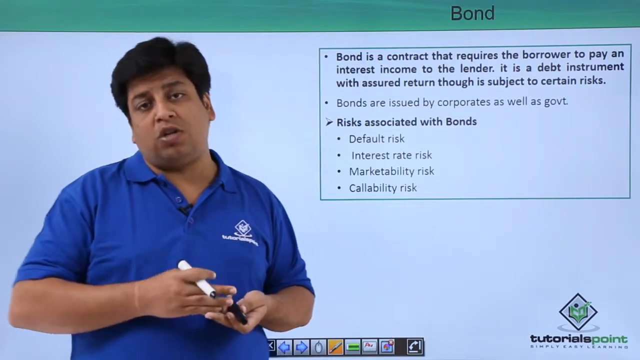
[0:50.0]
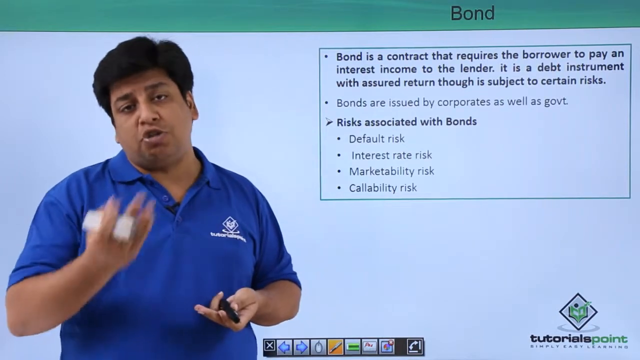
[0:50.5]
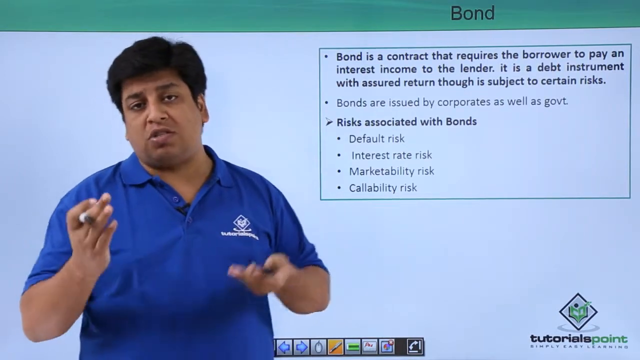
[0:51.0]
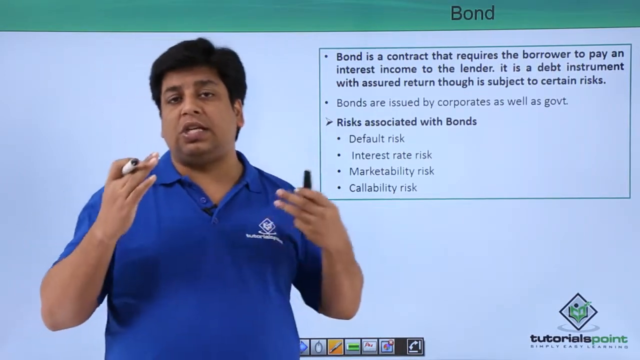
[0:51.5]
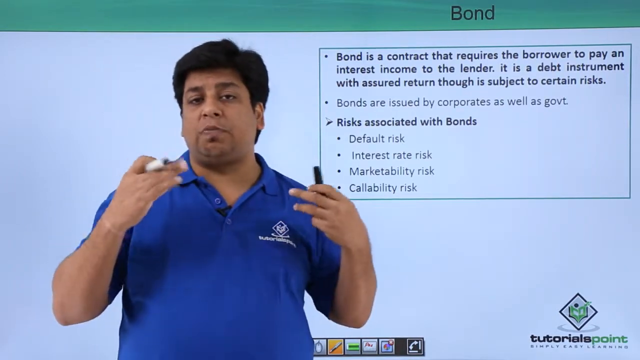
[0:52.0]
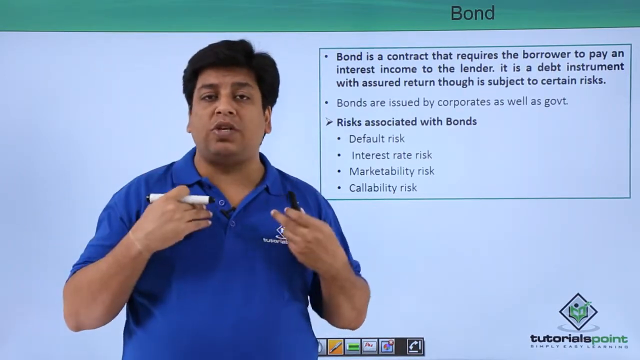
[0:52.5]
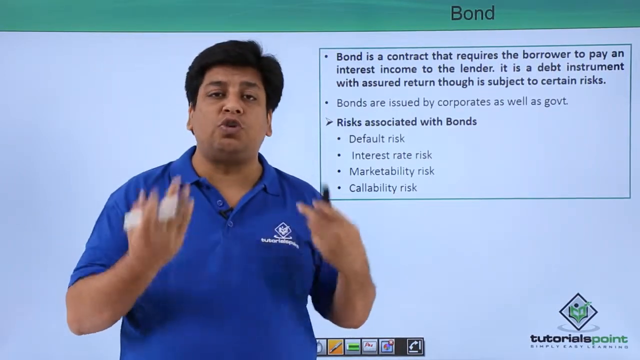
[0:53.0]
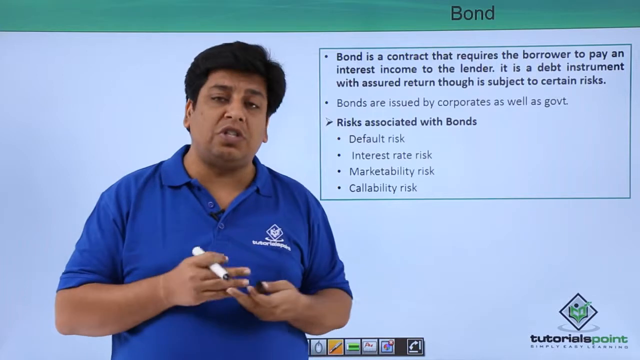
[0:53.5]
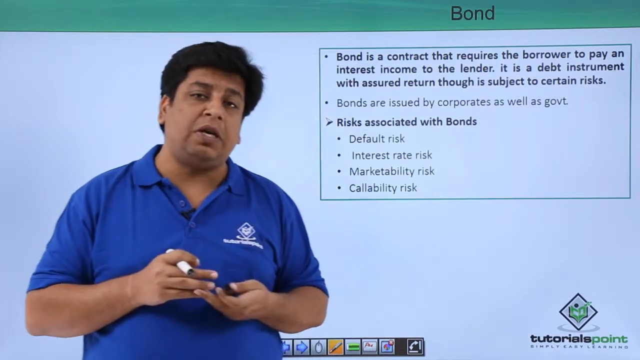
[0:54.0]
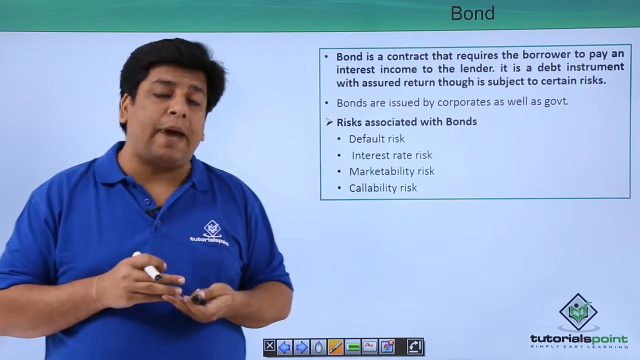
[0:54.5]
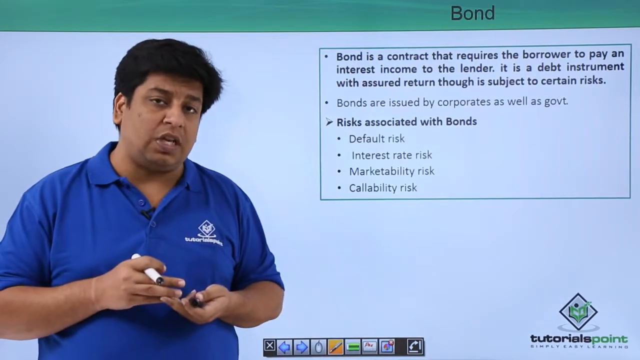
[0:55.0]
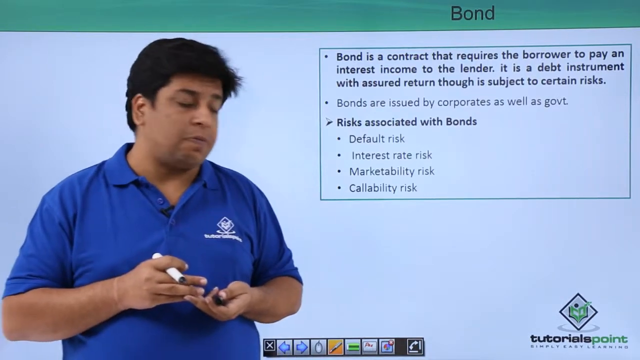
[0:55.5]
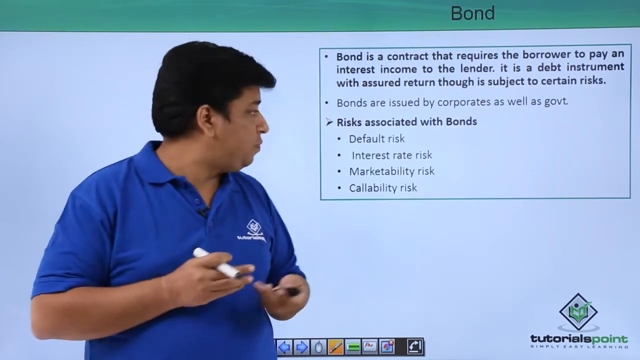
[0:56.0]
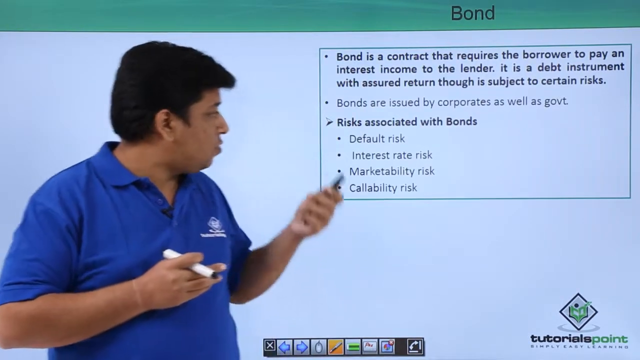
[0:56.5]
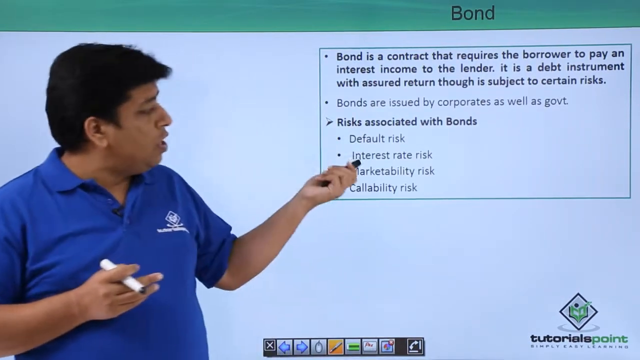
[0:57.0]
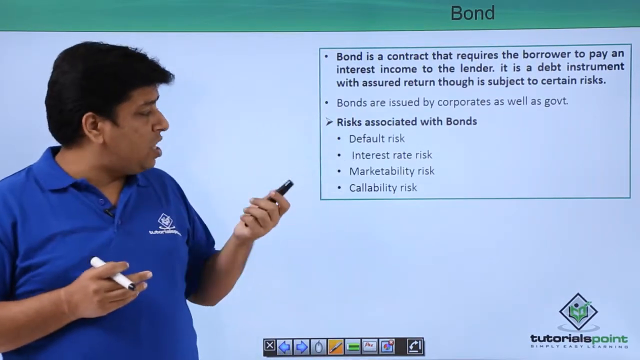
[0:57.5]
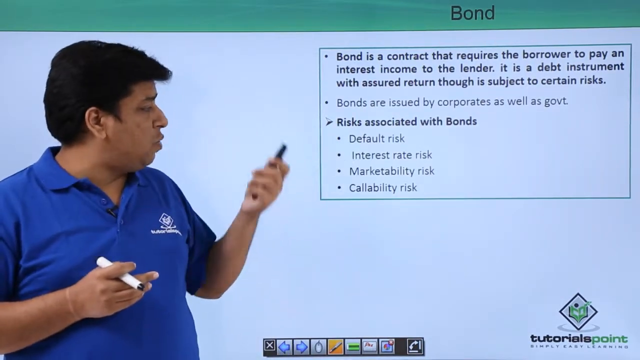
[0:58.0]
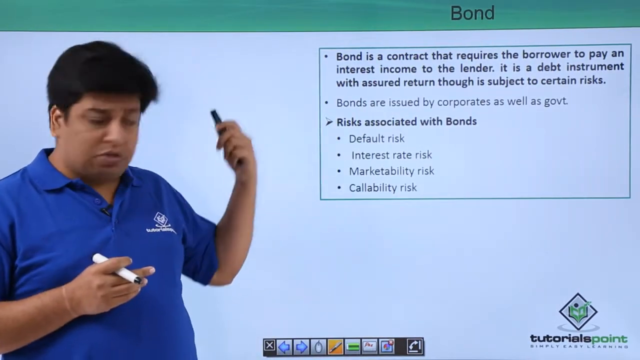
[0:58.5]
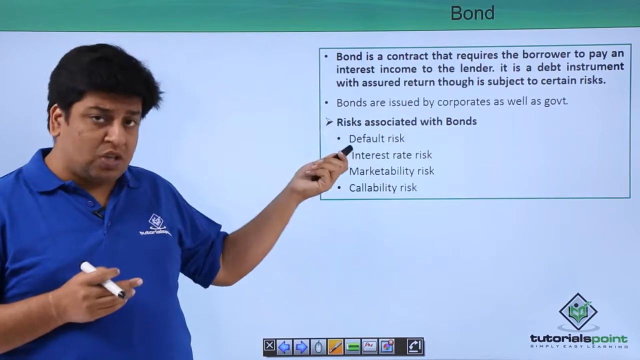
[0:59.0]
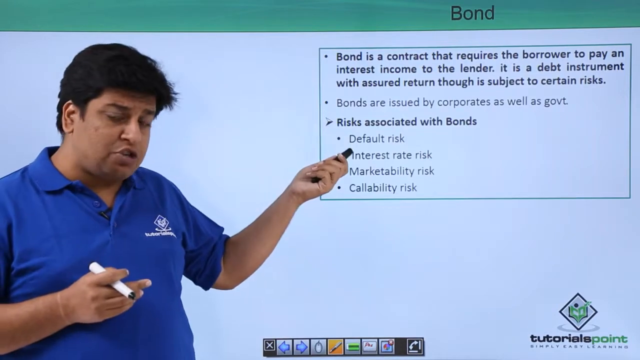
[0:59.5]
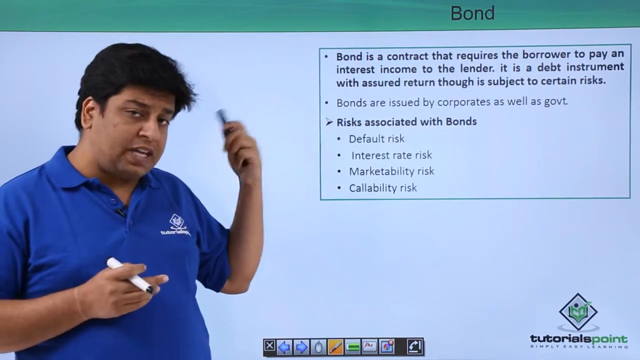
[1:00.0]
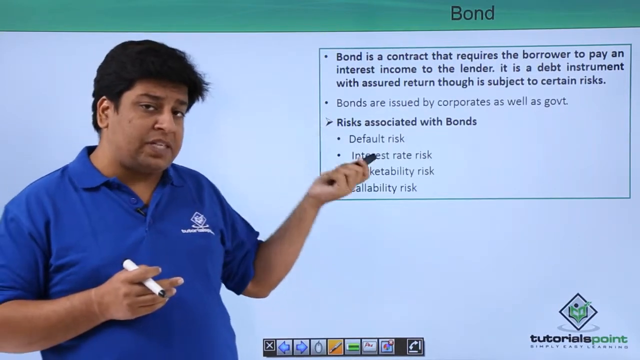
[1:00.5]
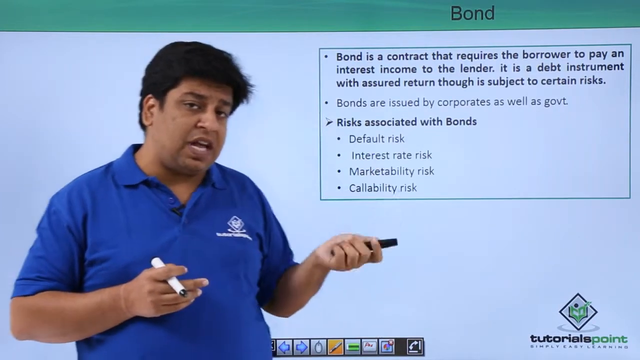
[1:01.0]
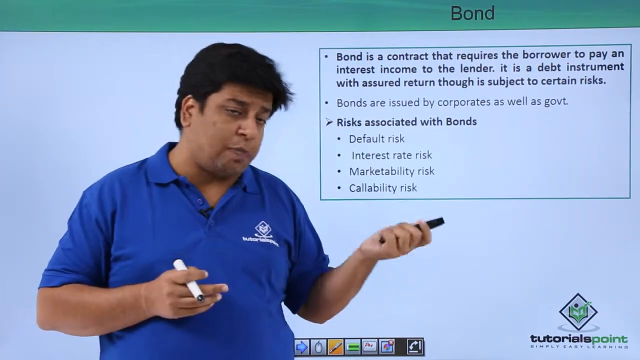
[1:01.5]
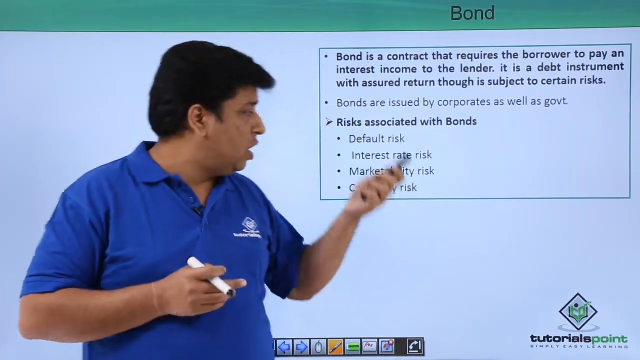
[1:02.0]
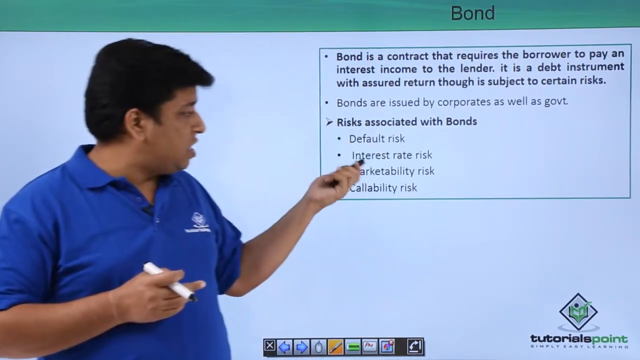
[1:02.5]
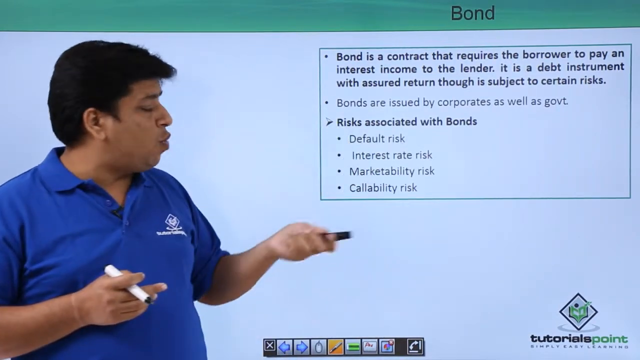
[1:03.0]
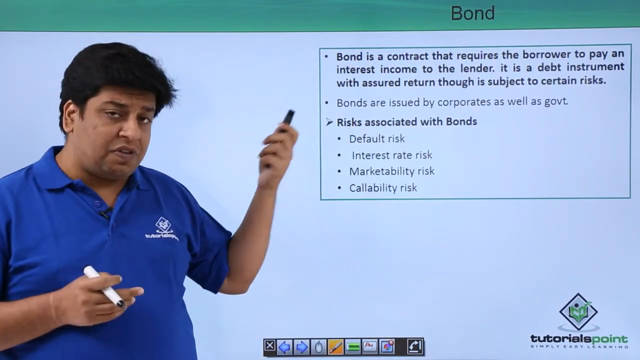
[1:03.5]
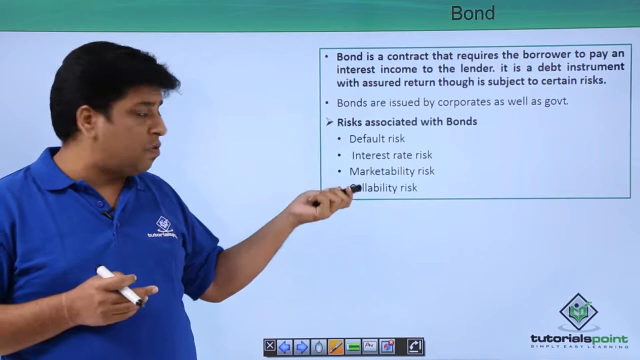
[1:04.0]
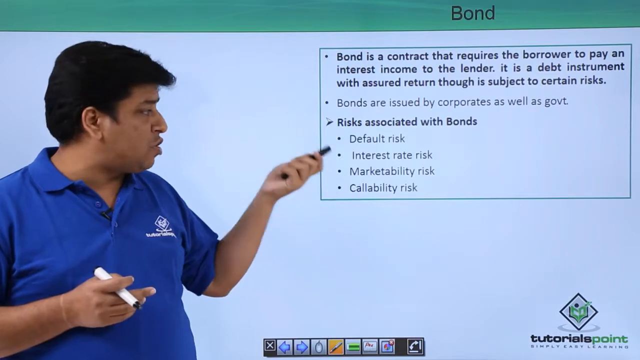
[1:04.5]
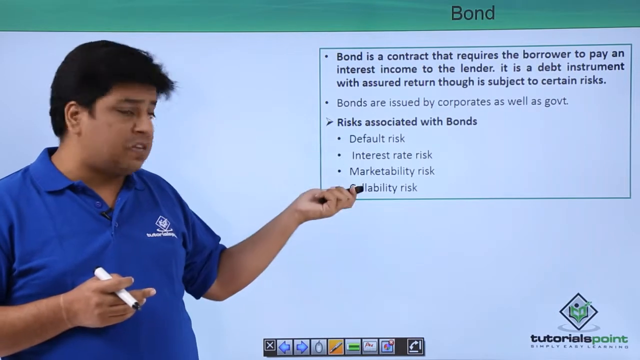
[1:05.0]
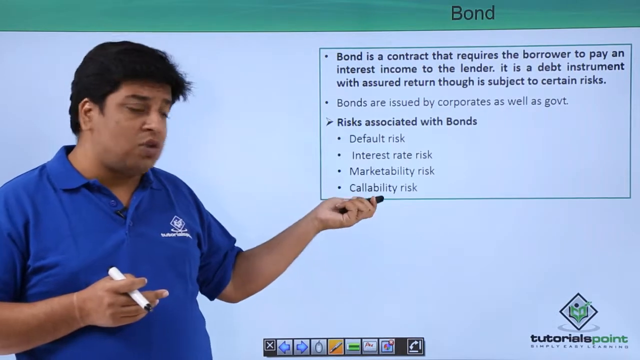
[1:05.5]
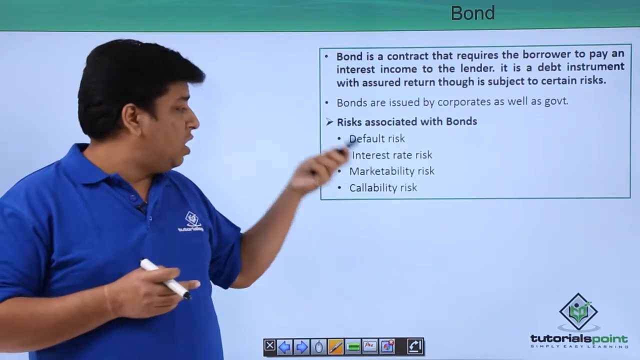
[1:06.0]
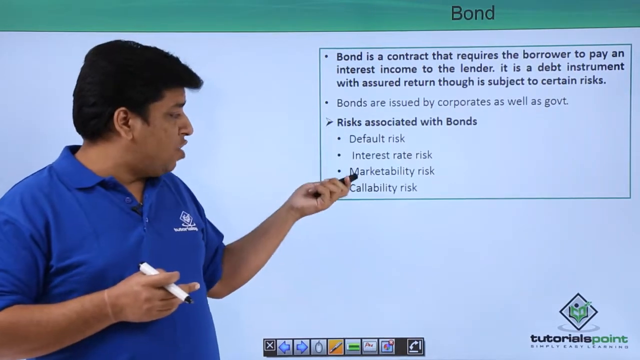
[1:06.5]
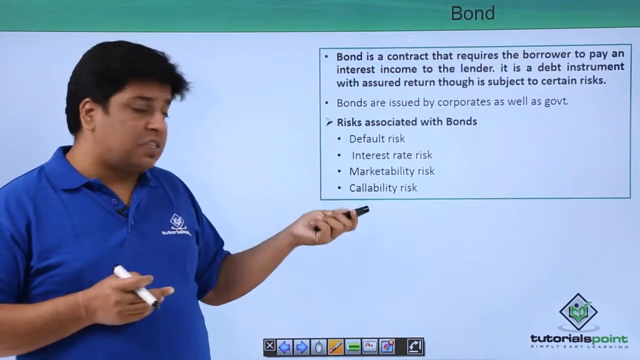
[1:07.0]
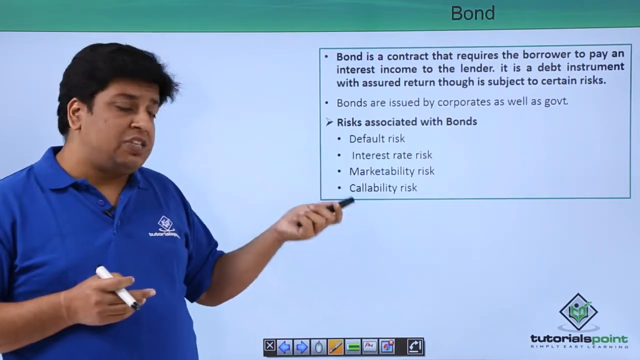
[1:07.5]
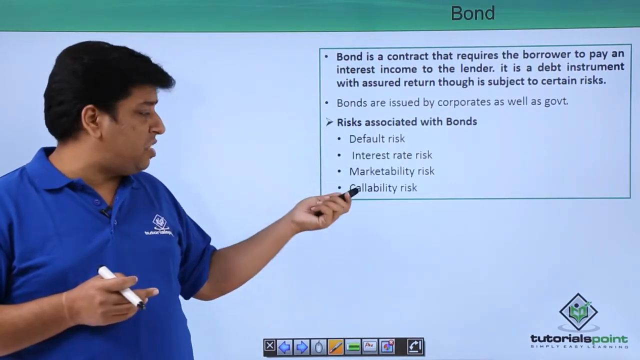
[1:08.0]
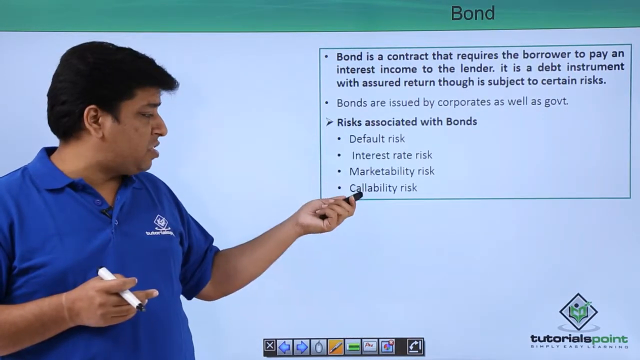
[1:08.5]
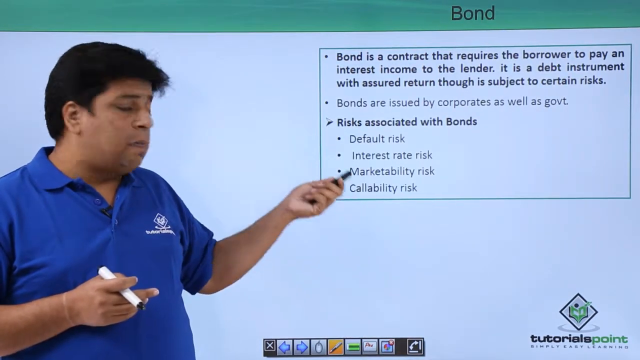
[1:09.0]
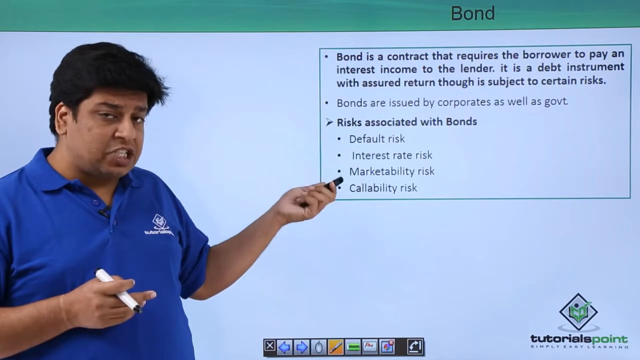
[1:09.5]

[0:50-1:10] The Indian man on the left side of the screen wears a blue polo shirt with a company logo on the left breast. He has black hair, holds a marker in his right hand and the marker cap in his left hand. He speaks with passion, using his hands and waving them around, and refers to a definition over his left shoulder. The definition reads "bond is a contract that requires the borrower to pay an interest income to the lender. It is a debt instrument with assured return, though is subject to certain risks." Below it are the risks associated with bonds, including "default risk" and "callability risk". He appears to be lecturing on what bonds are, speaking to the points on the screen beside him.